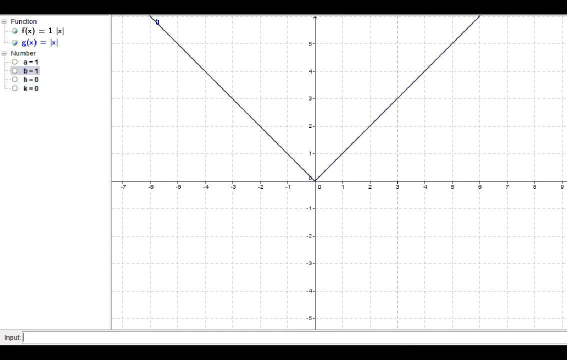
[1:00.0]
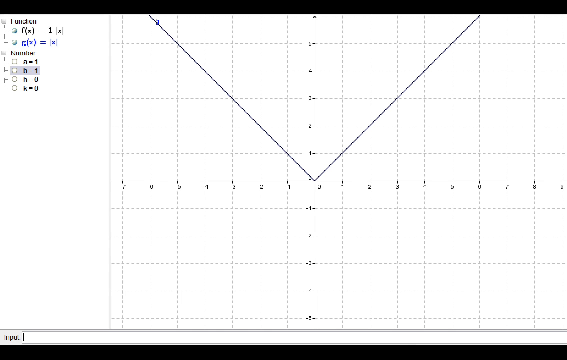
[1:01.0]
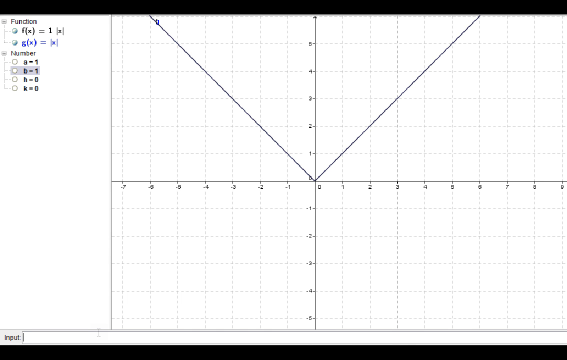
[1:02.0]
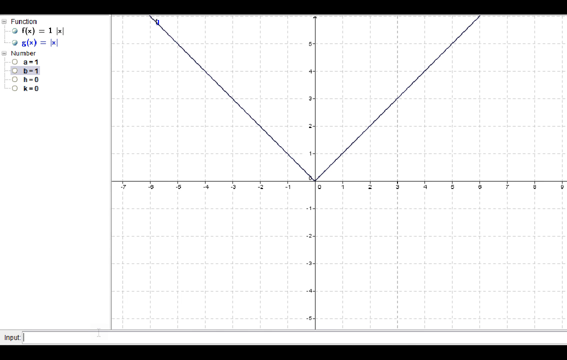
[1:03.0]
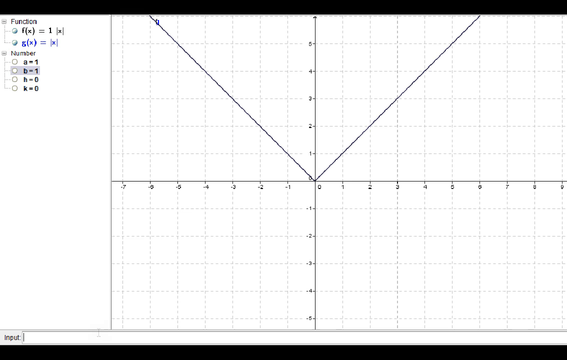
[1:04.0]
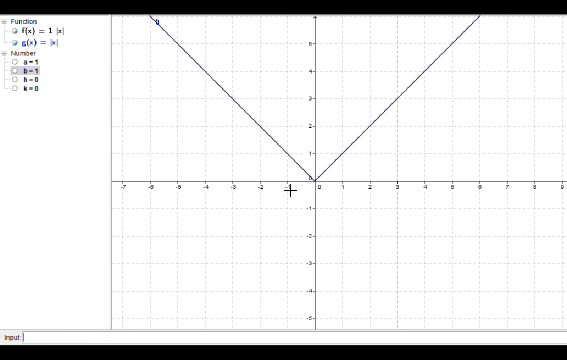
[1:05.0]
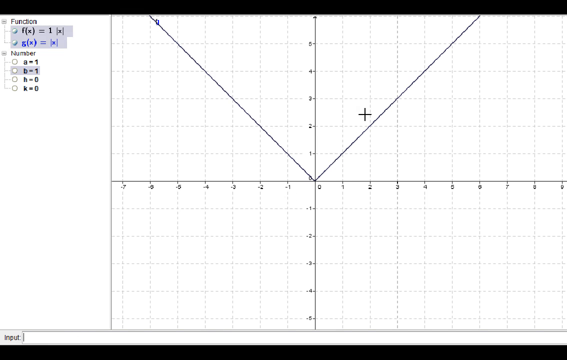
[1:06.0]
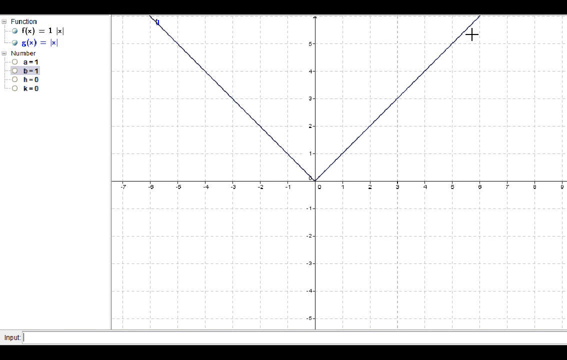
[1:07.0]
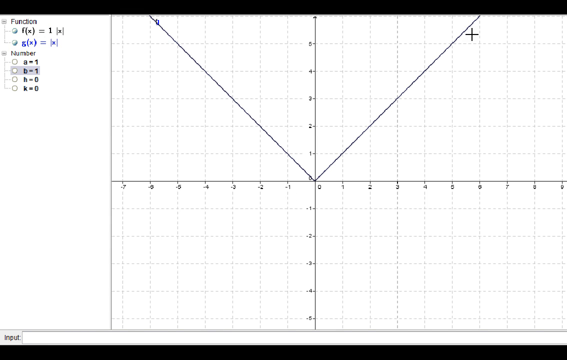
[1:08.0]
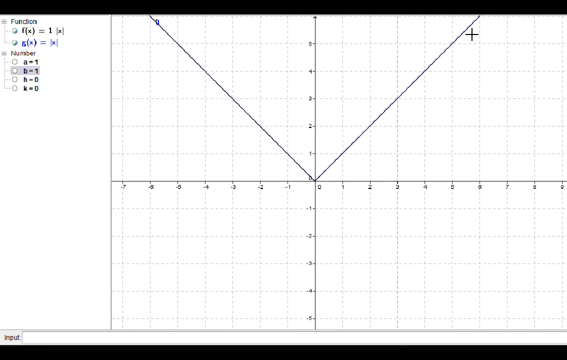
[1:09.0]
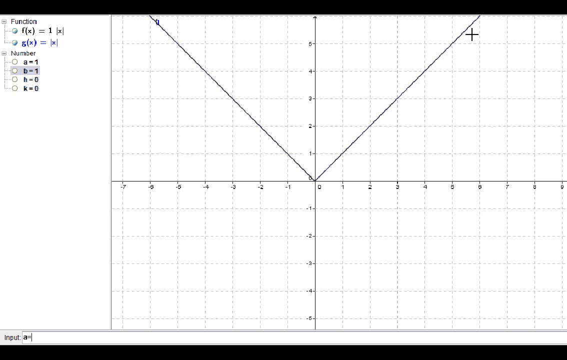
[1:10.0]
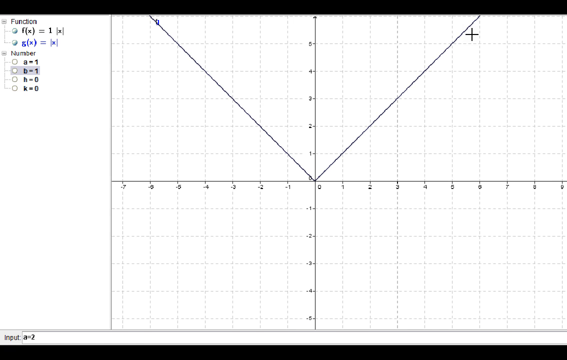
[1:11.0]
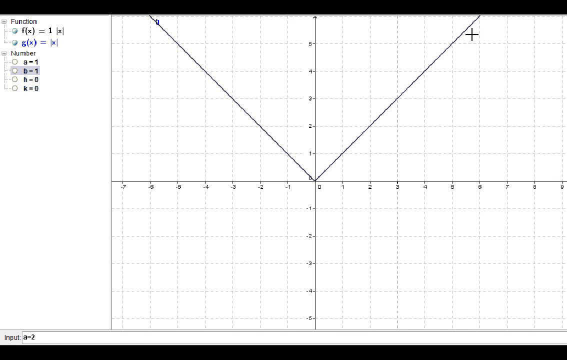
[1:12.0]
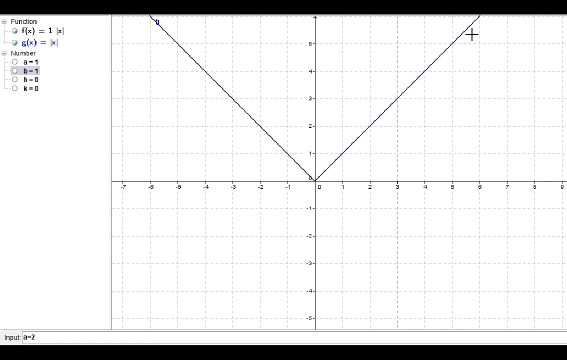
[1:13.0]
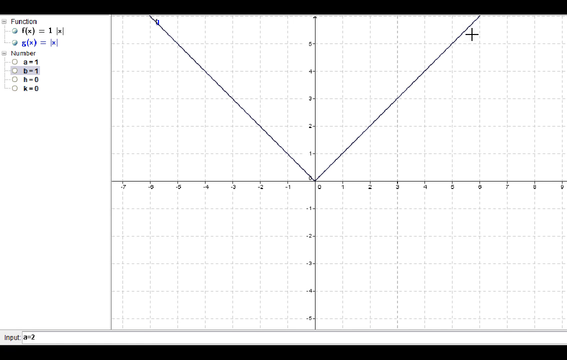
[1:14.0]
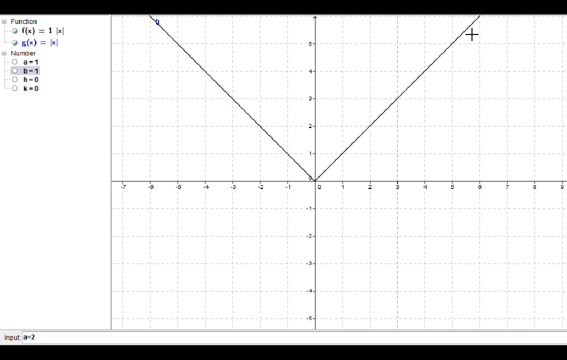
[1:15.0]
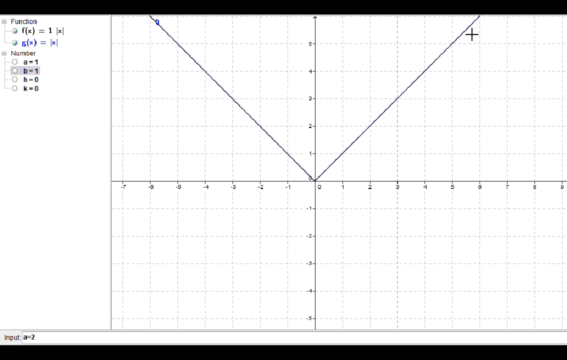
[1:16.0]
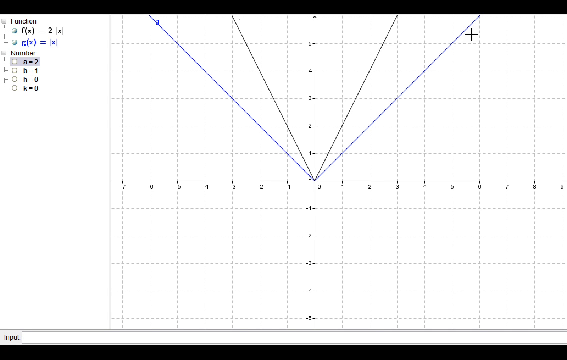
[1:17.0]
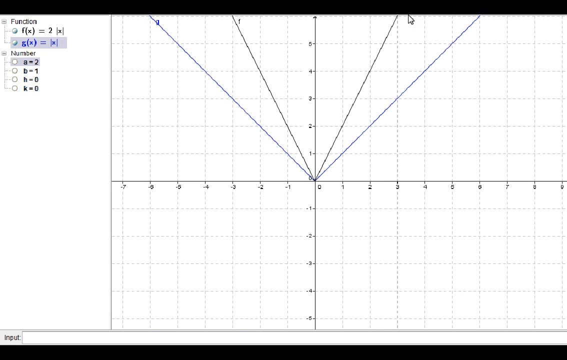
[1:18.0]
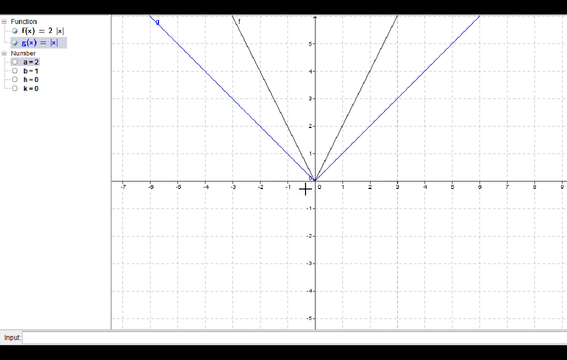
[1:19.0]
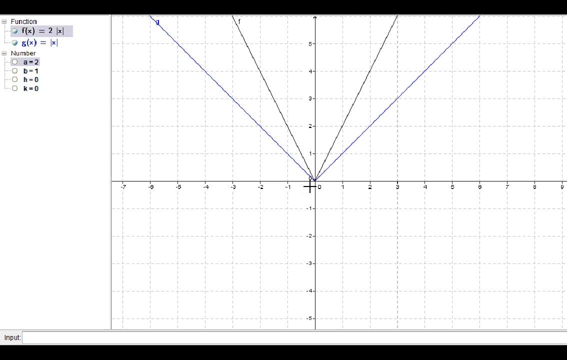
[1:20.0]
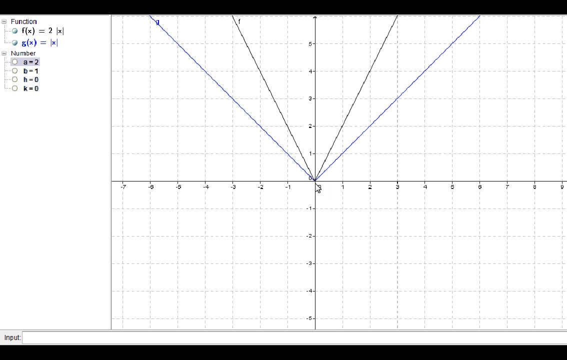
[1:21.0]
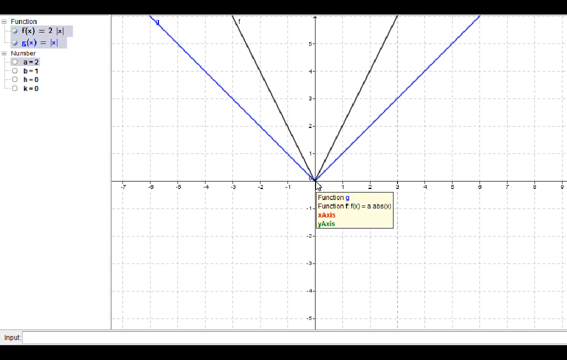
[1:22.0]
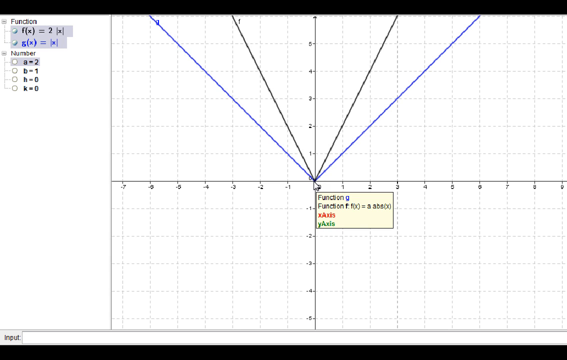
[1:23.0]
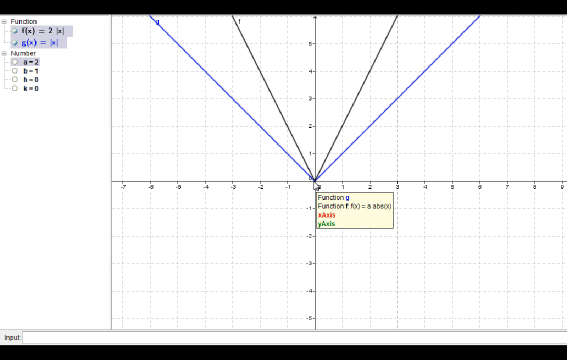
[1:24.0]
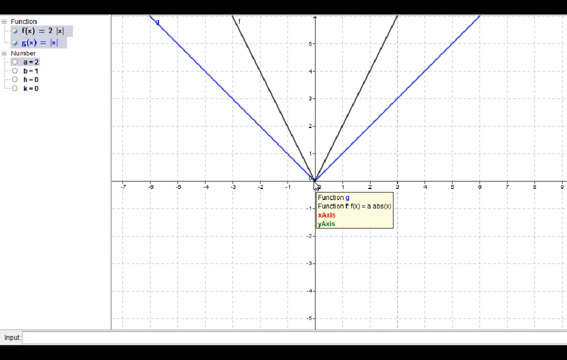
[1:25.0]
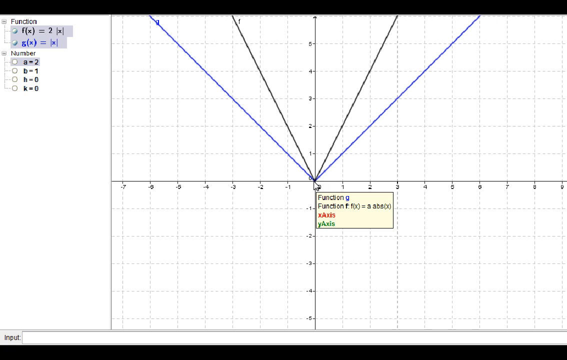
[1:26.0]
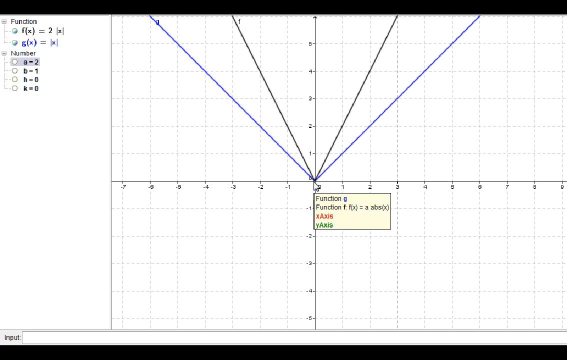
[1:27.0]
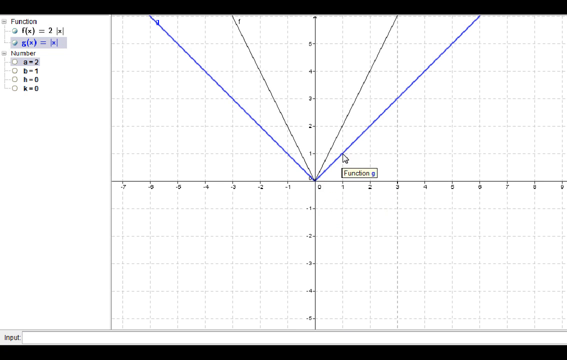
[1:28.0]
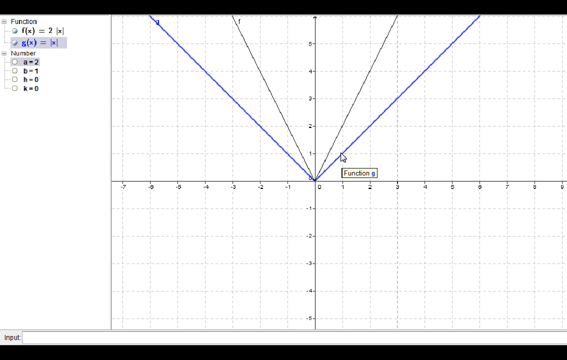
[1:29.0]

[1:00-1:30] The video moves to another screen showing a sort of hex grid with diagonal lines that form sort of right triangles in four quadrants, with an X and Y axis on a two-dimensional grid. Different functions of x are listed on the left-hand side, where functions can be plotted. The person kind of navigates the function buttons on the left, adding diagonal lines and changing the positions of the linear line functions on the grid. The axes show negative and positive numbers, roughly from negative 7 to positive 7 on each side. No humans or animals appear.